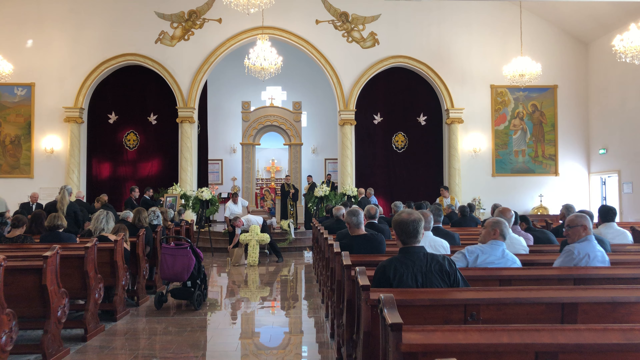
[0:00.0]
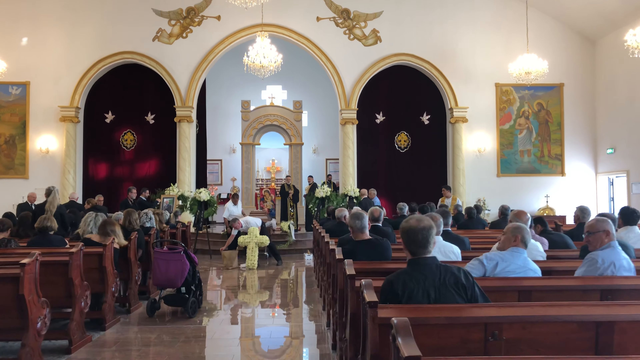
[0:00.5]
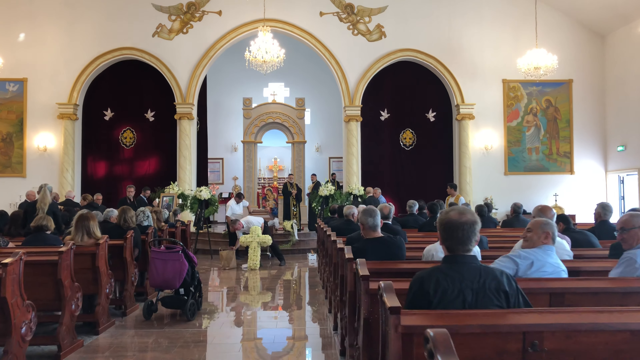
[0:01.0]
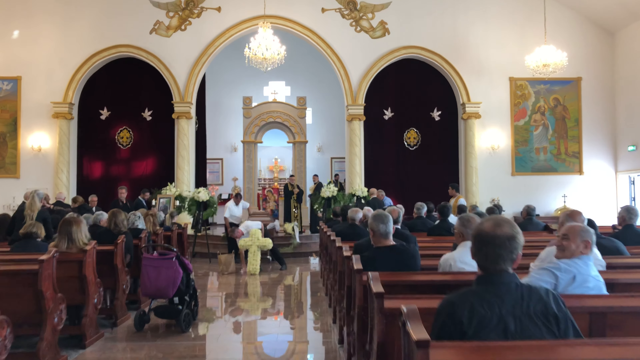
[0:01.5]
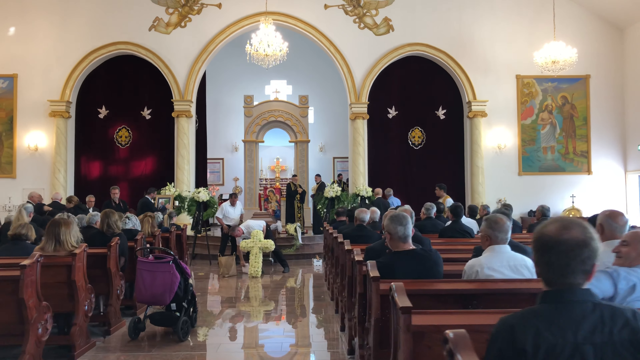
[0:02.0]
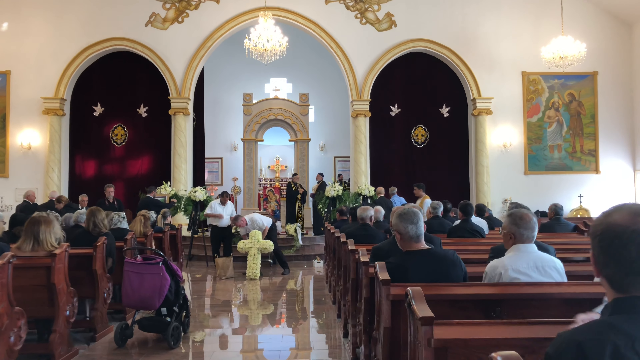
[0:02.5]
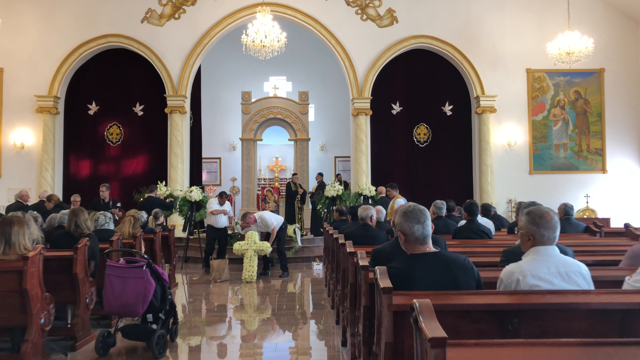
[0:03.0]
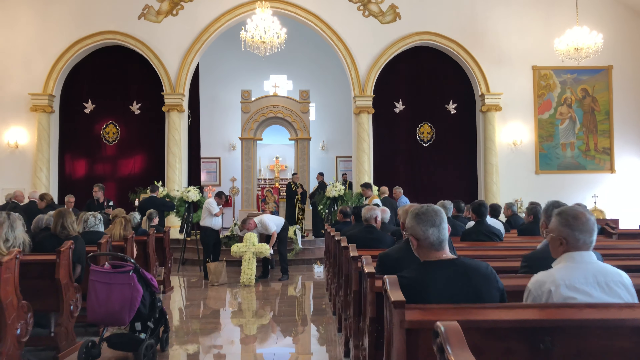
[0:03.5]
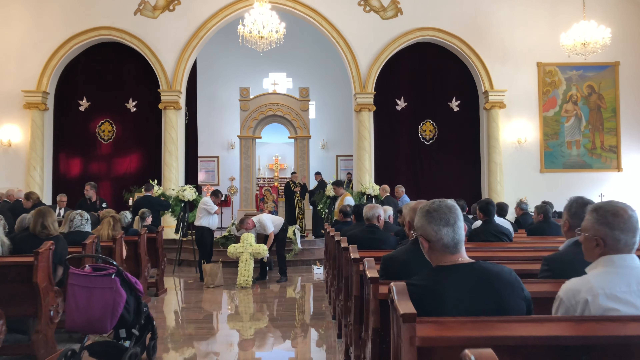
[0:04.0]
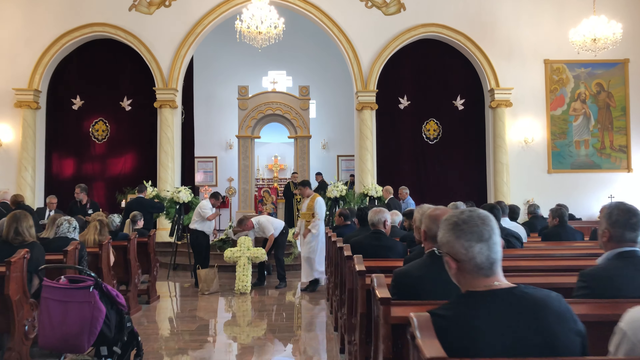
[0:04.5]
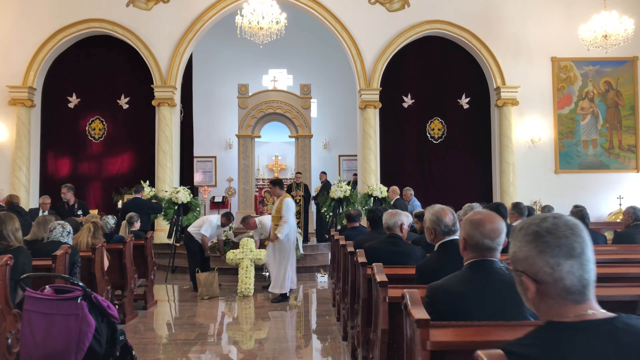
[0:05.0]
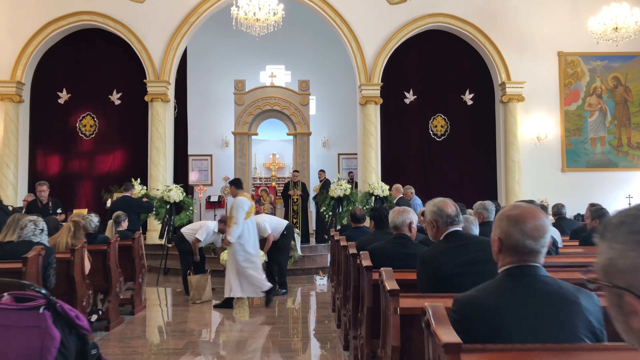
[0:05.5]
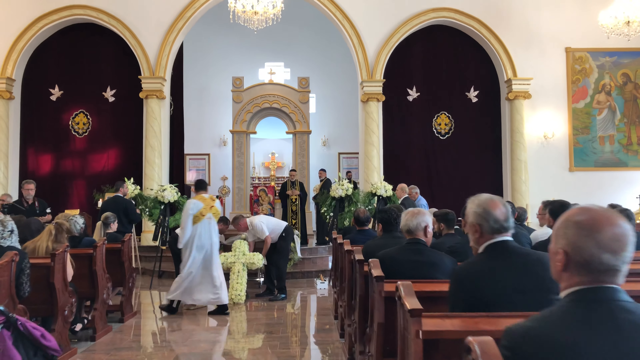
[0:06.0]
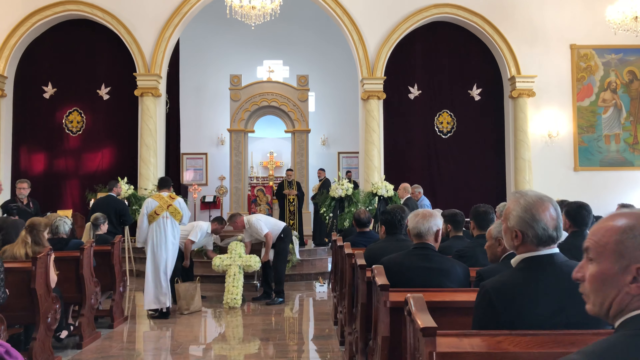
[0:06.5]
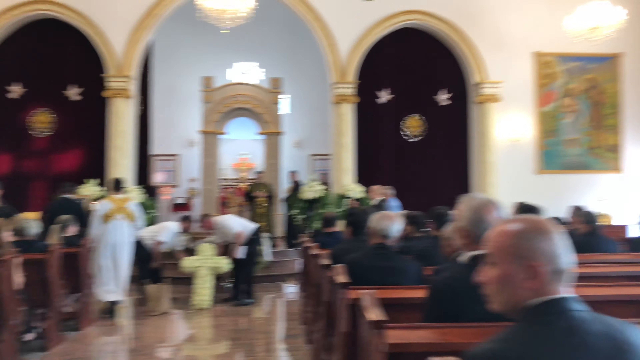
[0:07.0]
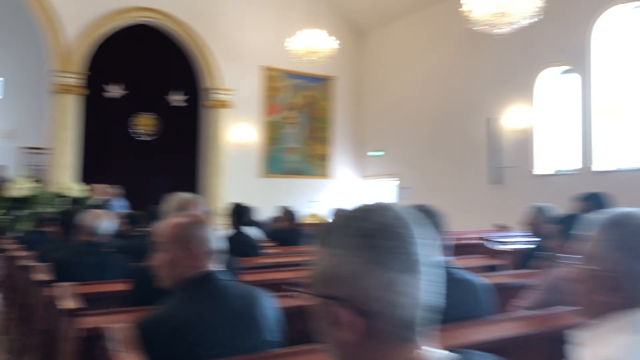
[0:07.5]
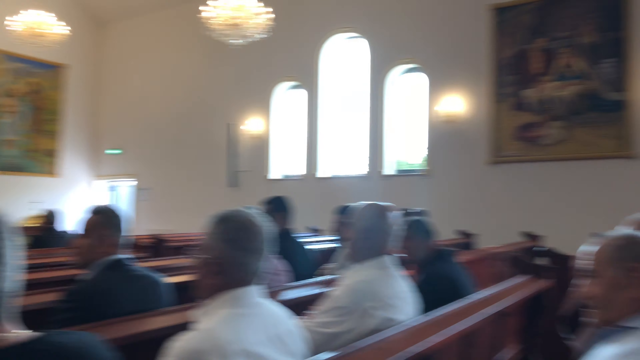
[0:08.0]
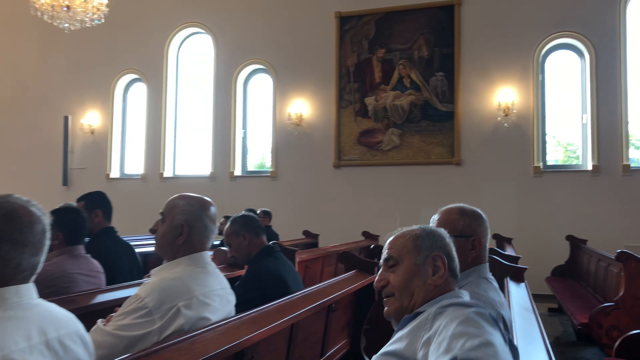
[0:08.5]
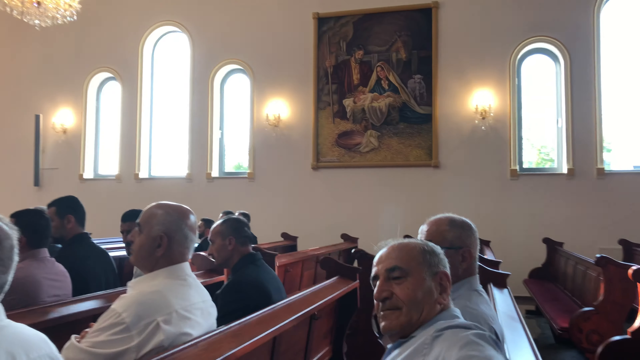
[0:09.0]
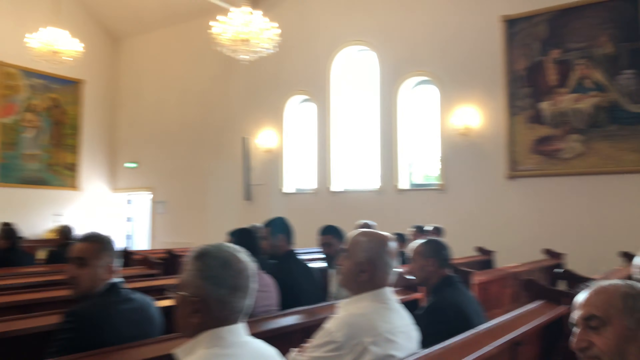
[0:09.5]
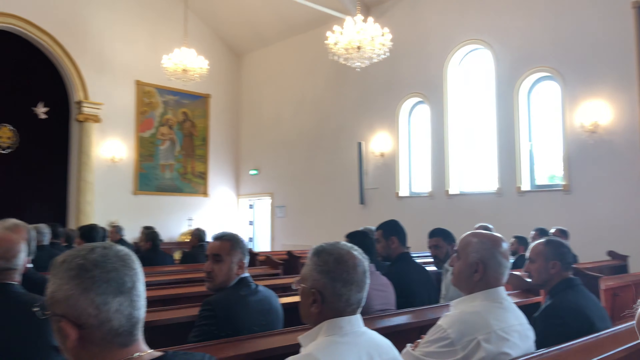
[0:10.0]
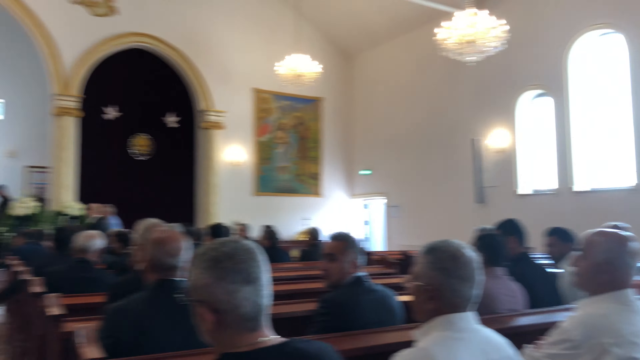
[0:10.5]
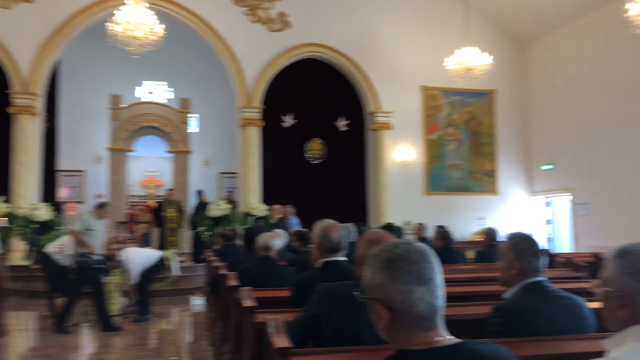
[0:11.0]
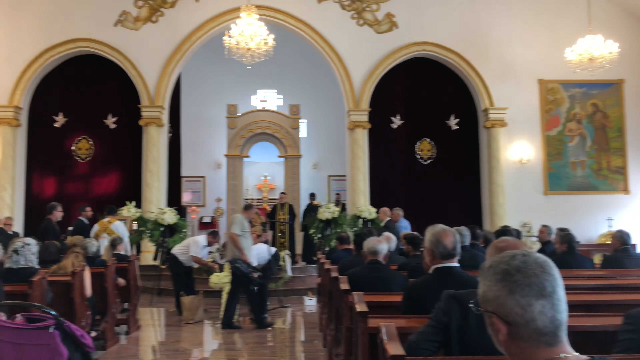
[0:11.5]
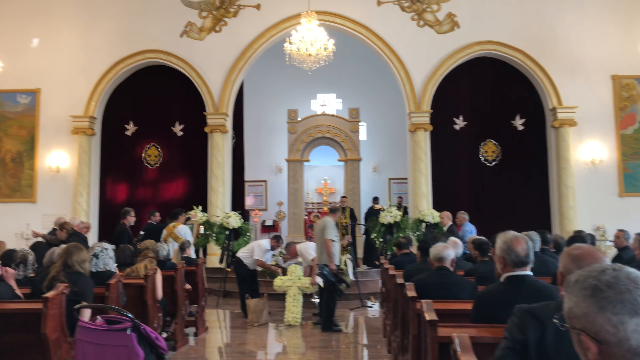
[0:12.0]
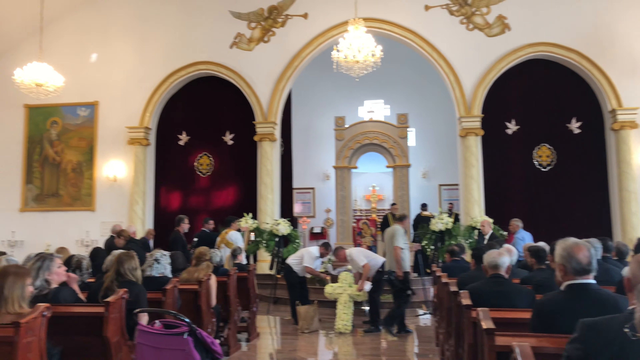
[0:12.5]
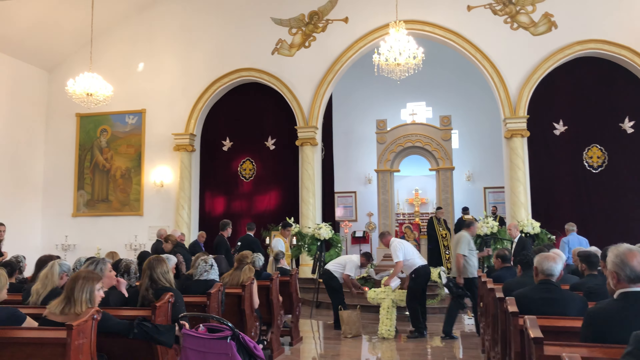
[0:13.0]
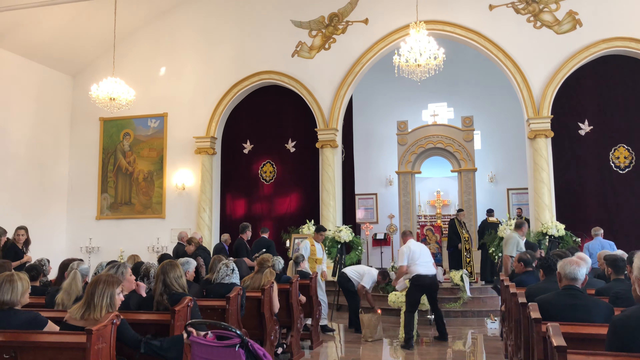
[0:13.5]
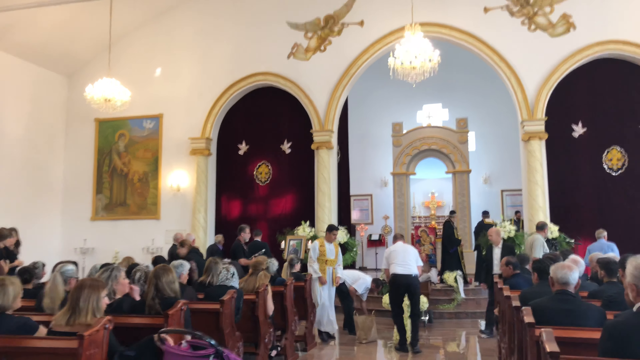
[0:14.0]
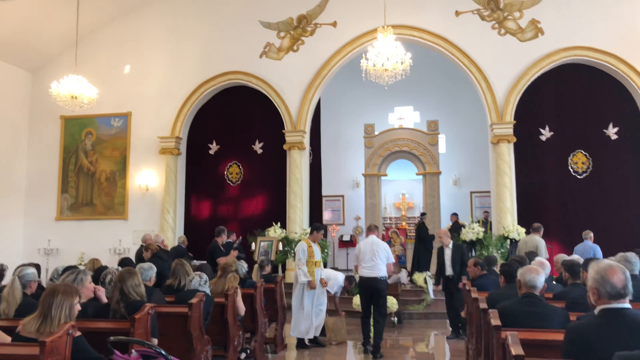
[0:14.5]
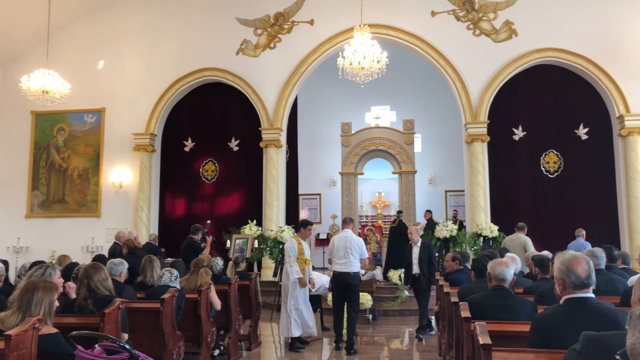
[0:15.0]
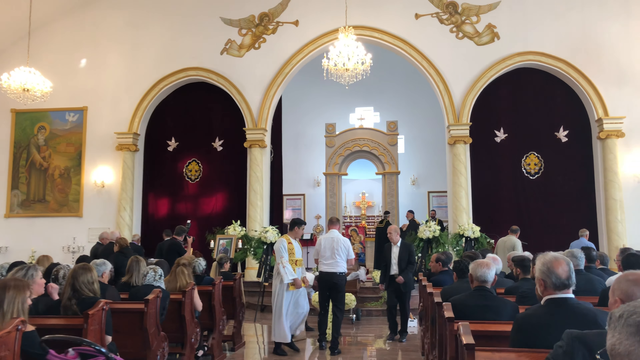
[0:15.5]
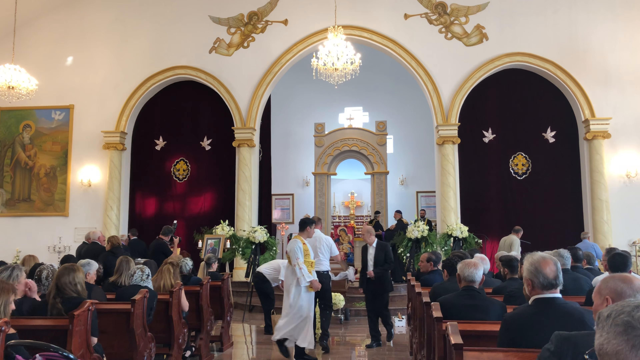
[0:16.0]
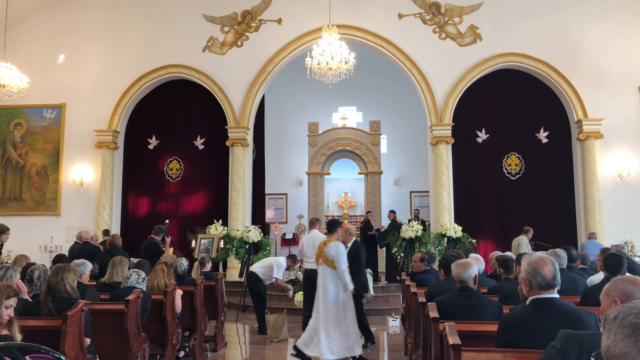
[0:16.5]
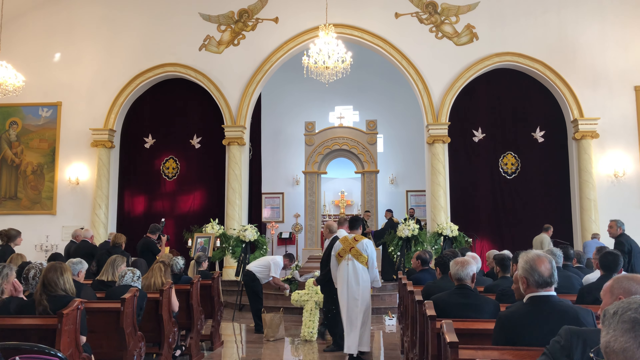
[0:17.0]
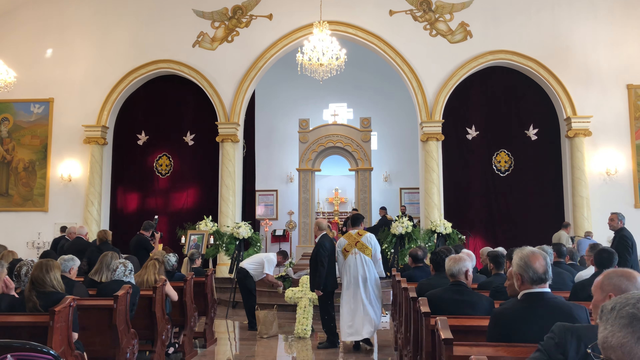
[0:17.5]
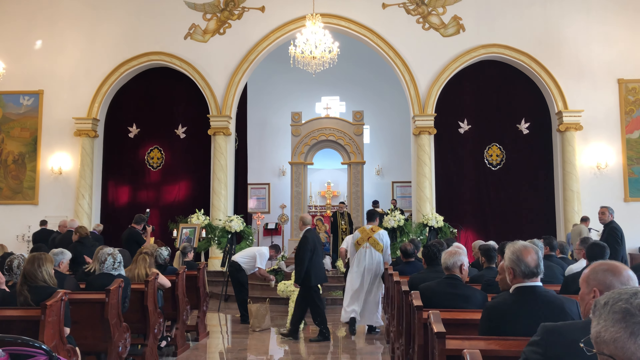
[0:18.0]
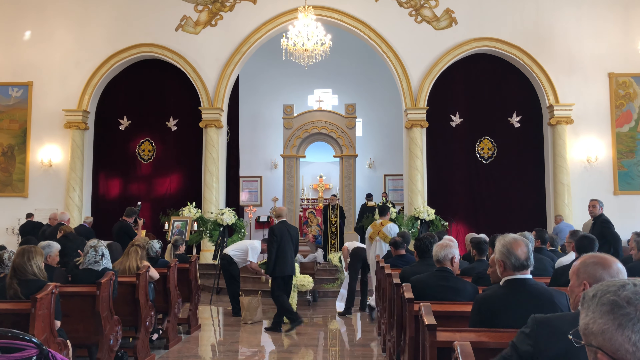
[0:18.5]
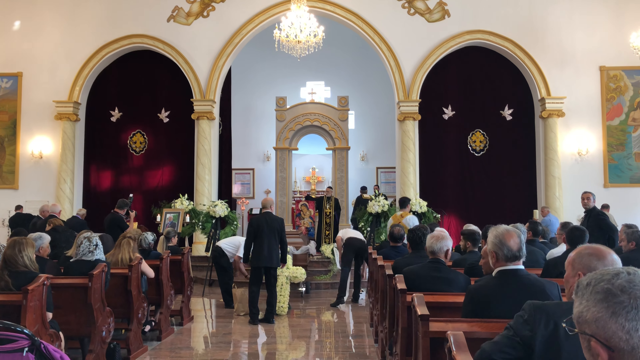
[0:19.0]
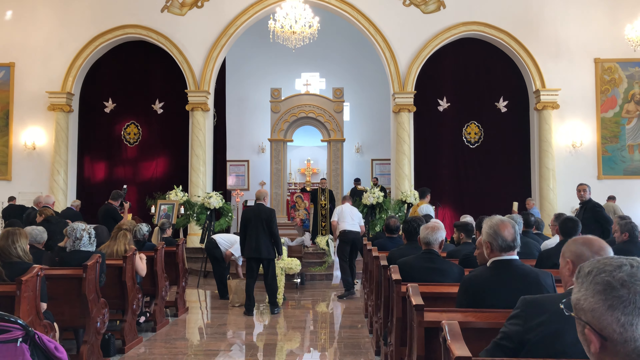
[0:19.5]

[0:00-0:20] The video opens with a view from the back of a church that appears to be an older, traditional one, with wooden pews and a lot of old religious imagery and paintings. The camera moves forward toward the front of the room, where two men are moving around a cross that appears to be made of flowers. The camera then pans around to show the congregation, apparently mostly men on the right and women on the left. It continues forward toward the front, where there are a variety of clerics in traditional church garb: seemingly some priests, and one man in a white robe with a yellow sash that crosses over both sides of his shoulders. There are multiple crosses as decorations, and two large golden angels playing trumpets at the top of the front wall near the ceiling. Chandeliers hang all around the interior of the building, which has a very high ceiling. Most of the congregation appears to be wearing black, suggesting this could possibly be a funeral.